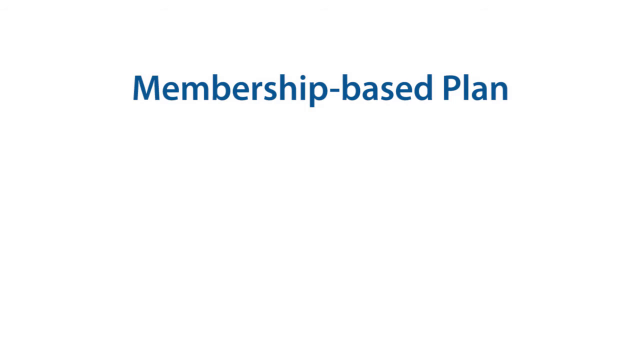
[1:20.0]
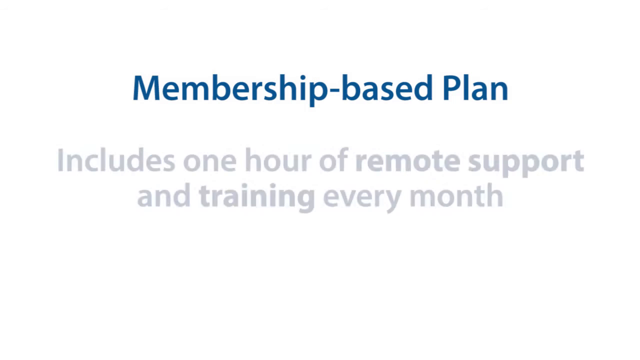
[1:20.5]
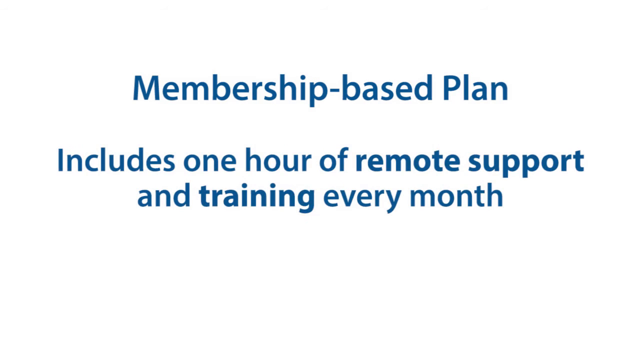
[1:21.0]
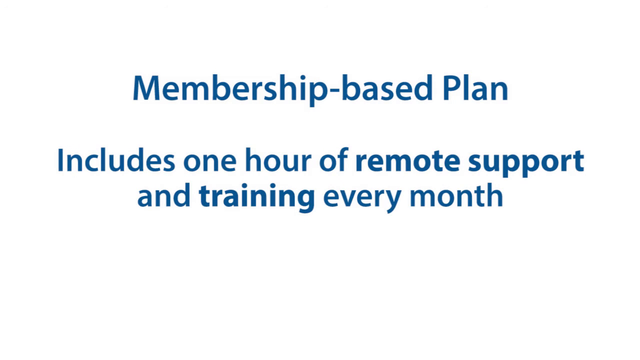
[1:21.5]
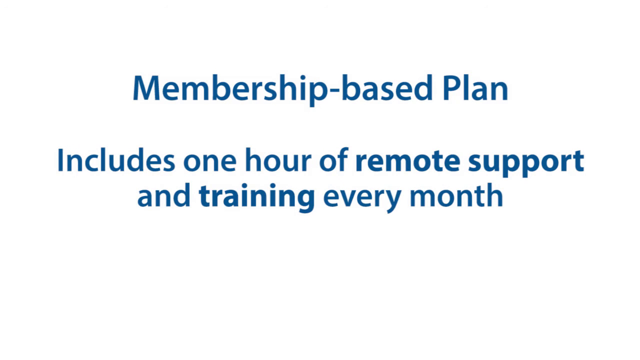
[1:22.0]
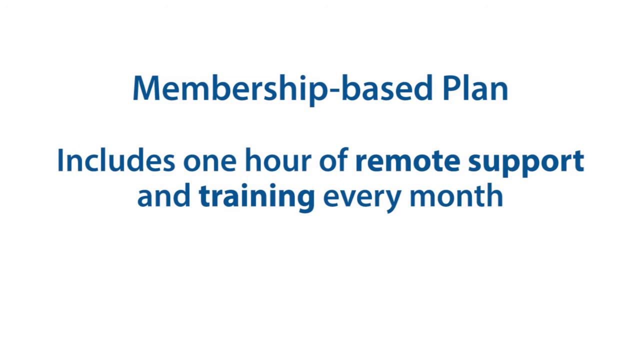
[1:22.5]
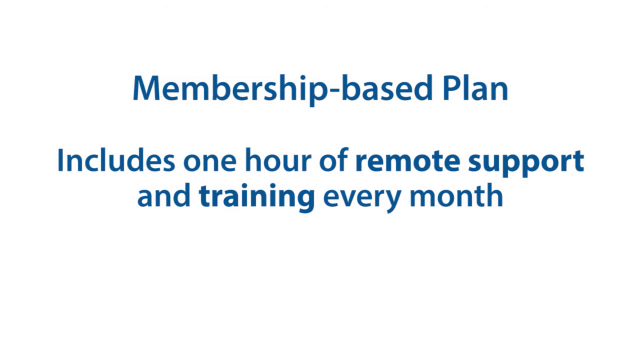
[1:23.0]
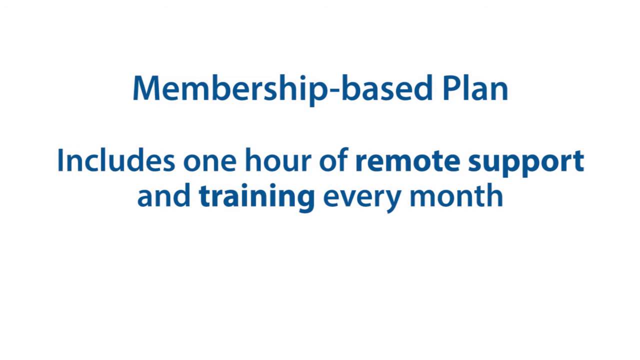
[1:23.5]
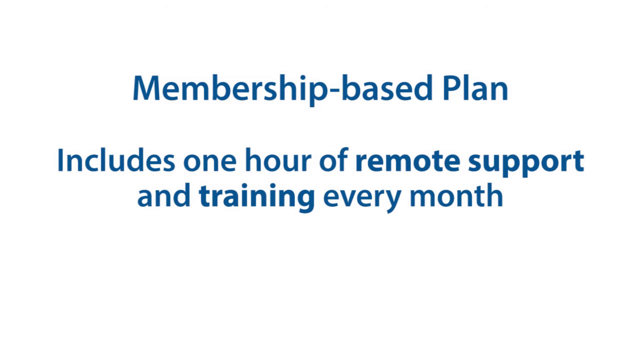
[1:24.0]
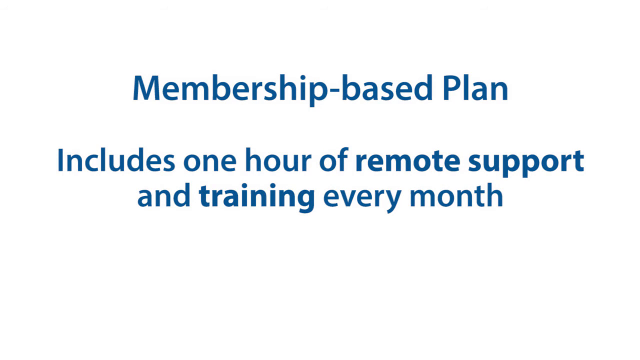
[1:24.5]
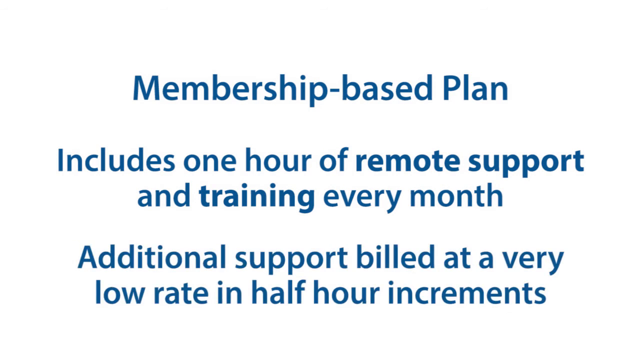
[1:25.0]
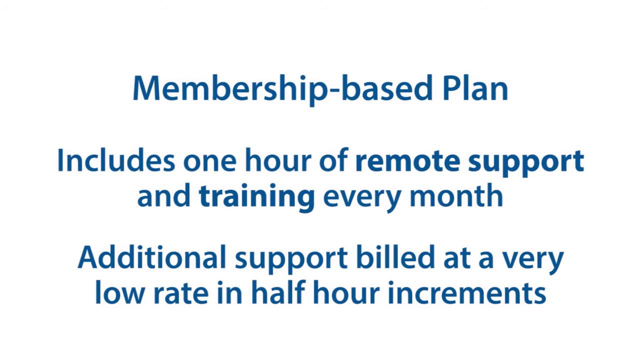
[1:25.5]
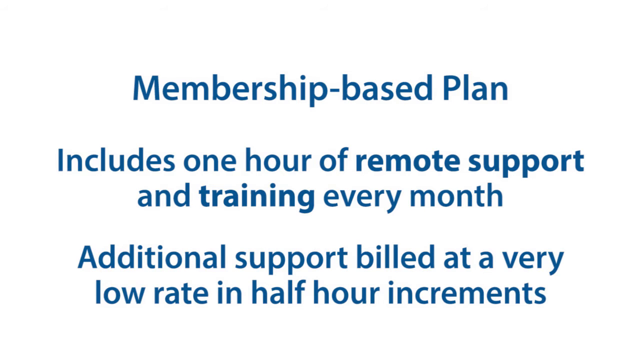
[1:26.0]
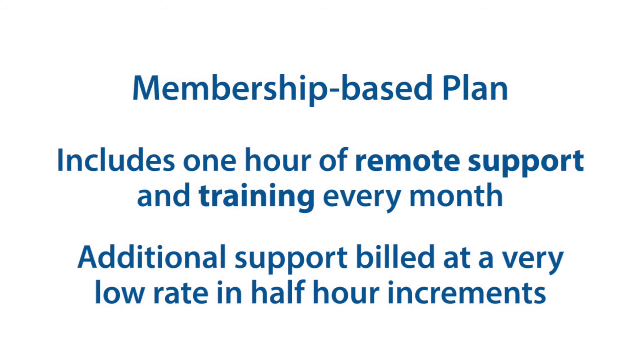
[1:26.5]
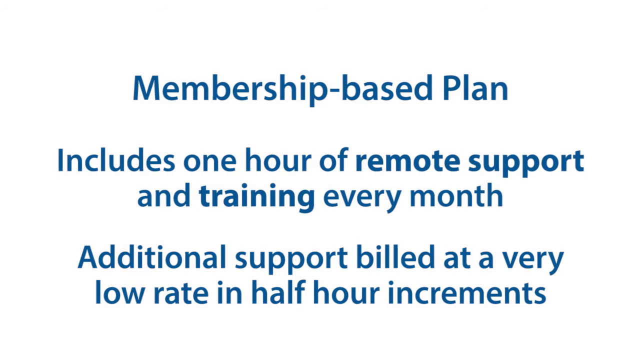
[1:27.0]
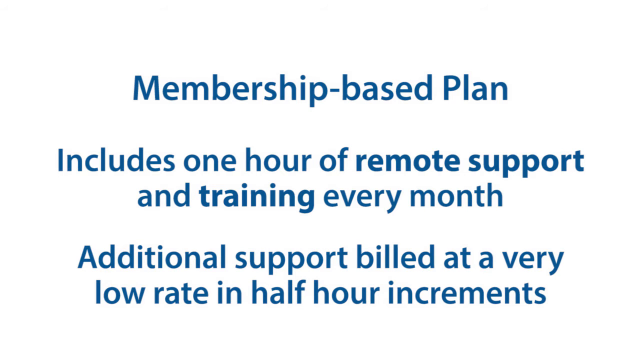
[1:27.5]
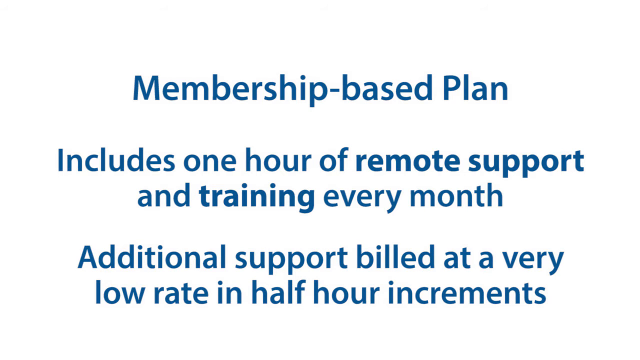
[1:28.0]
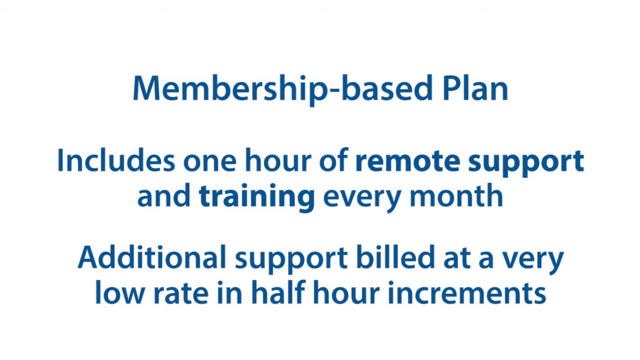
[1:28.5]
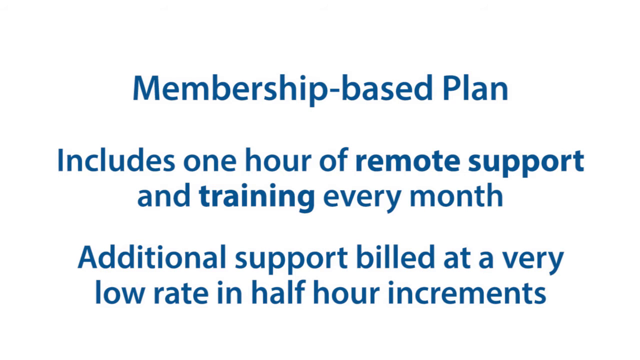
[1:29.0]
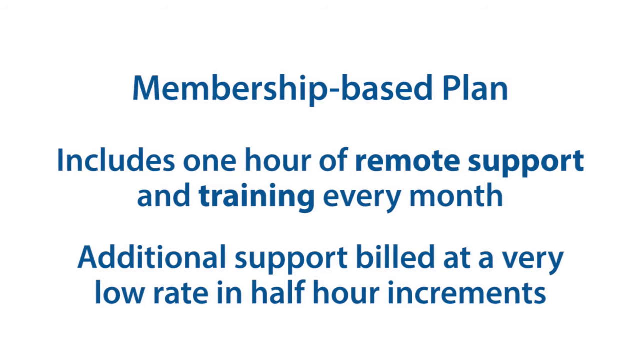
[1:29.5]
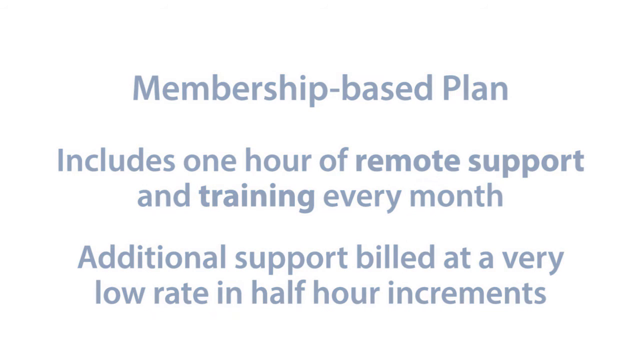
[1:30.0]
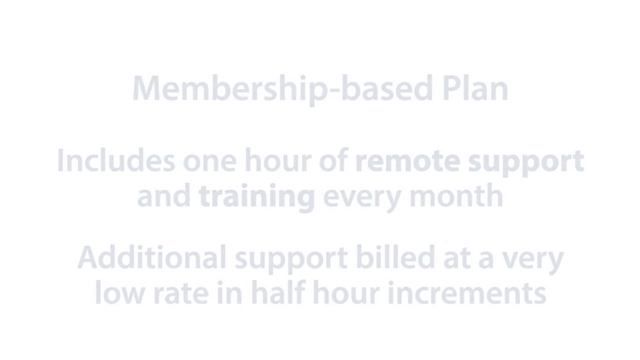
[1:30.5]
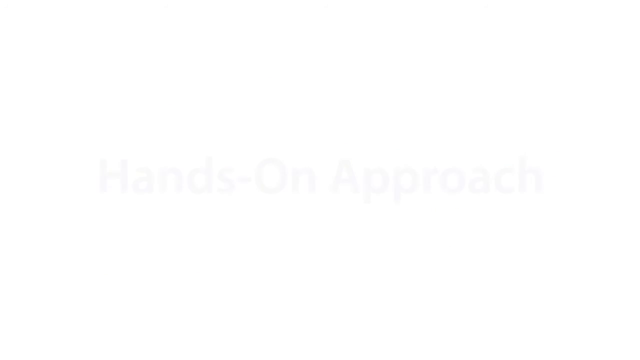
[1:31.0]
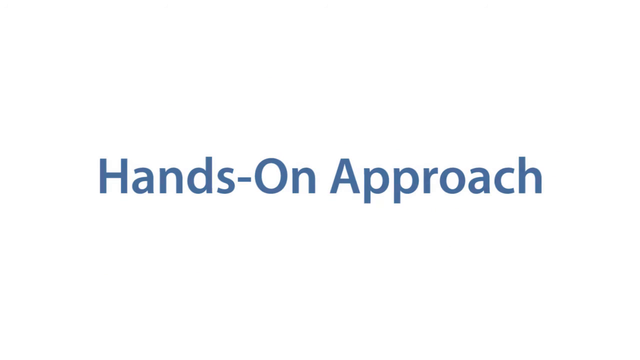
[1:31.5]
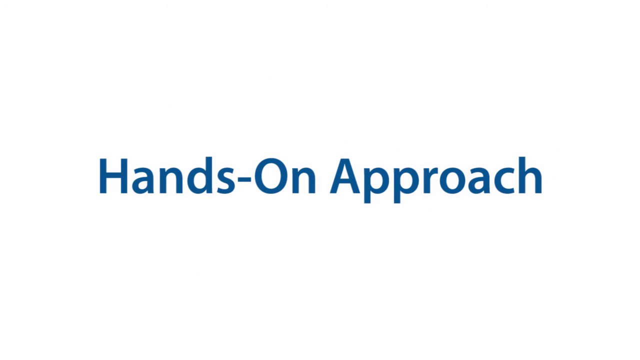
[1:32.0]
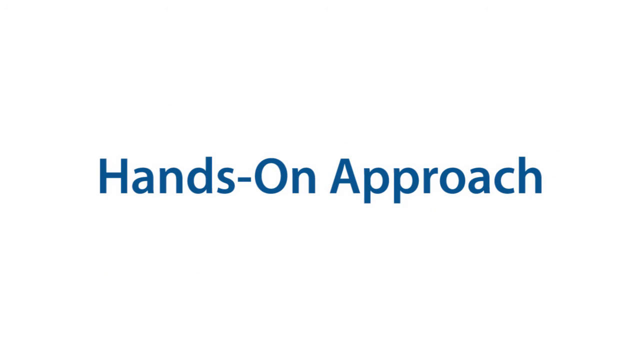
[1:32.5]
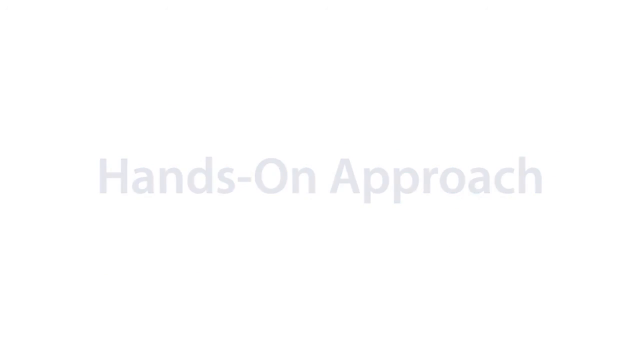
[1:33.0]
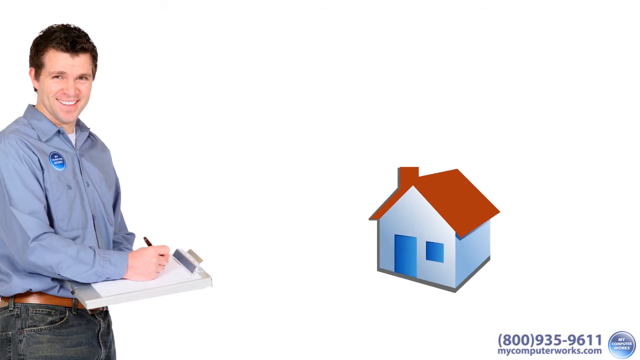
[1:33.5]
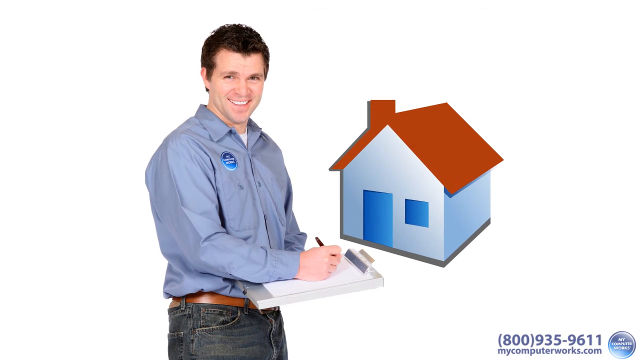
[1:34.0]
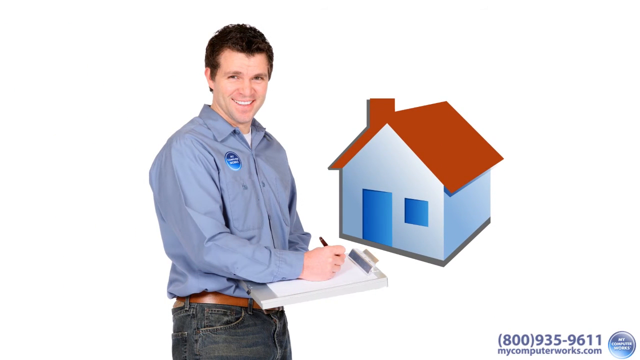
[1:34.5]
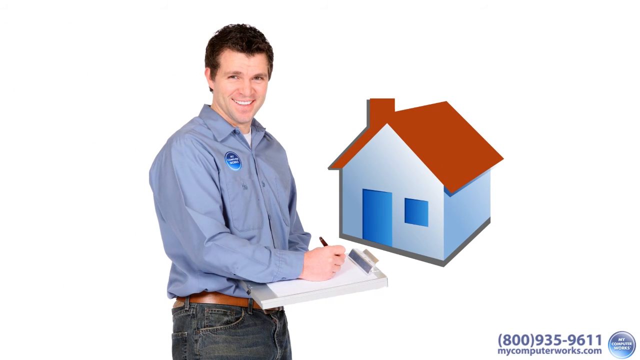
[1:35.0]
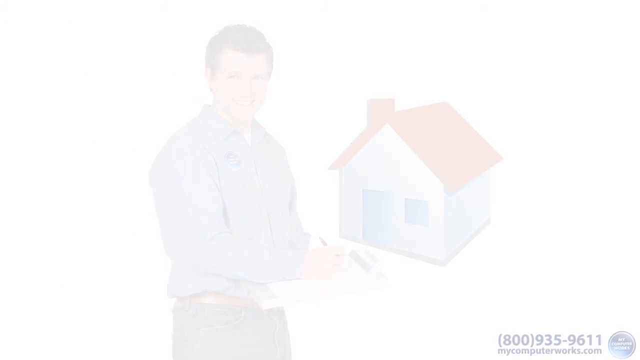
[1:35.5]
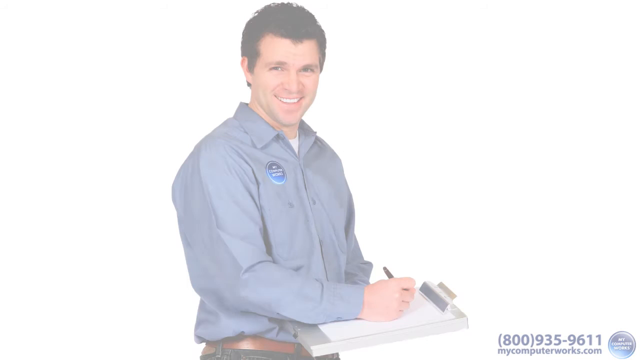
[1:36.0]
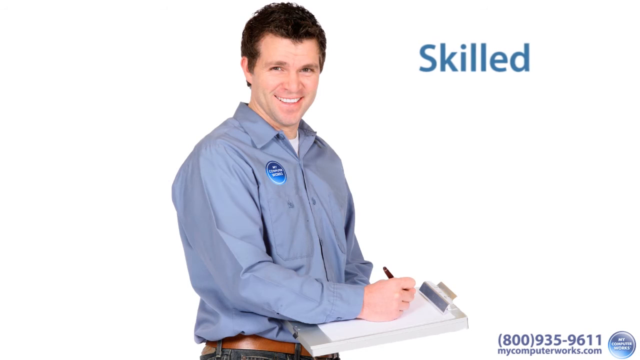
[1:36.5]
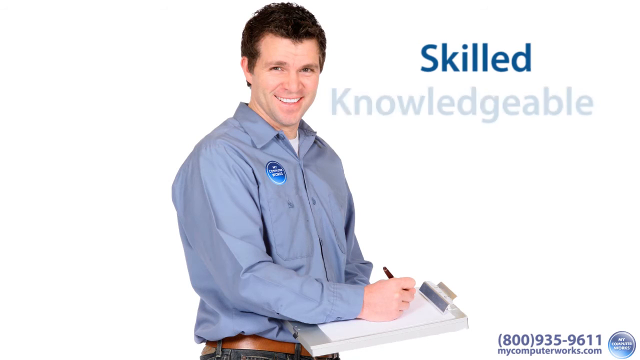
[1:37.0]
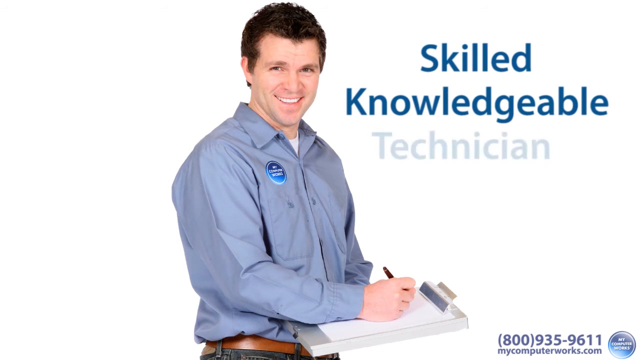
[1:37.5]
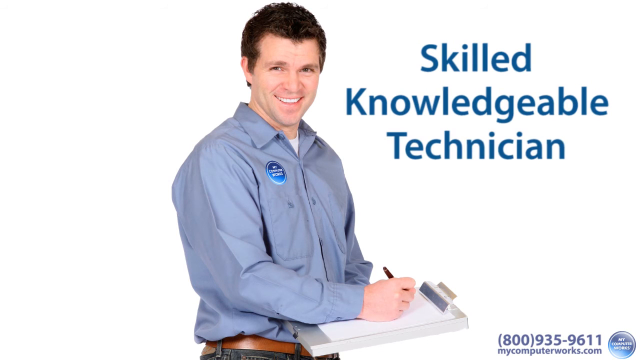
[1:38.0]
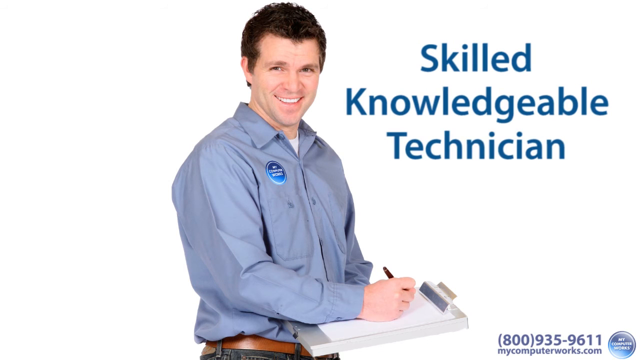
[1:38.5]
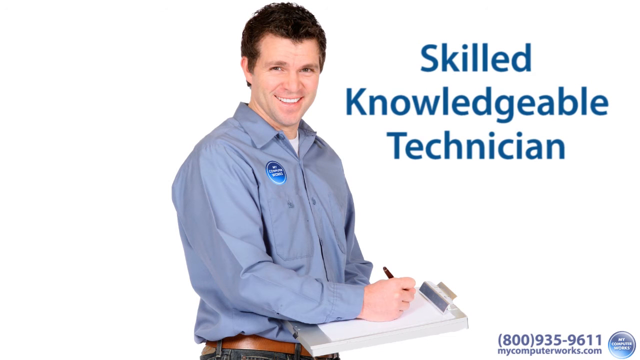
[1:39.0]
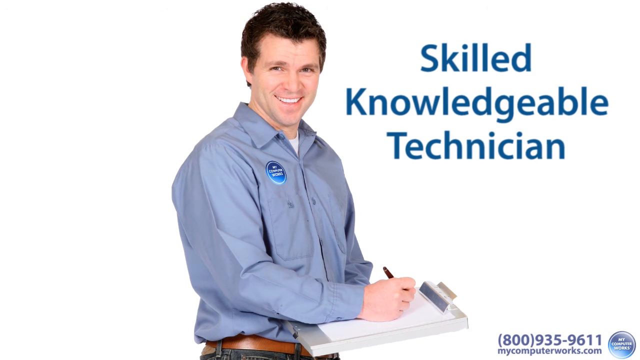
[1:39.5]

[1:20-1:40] The blue text "Membership-based Plan" remains along the top of the white screen. More blue text fades in underneath: "Includes one hour of remote support and training every month". After a few seconds, more blue text appears below it: "Additional support billed at a very low rate in half hour increments". This text fades out, leaving the white screen, before blue text fades in in the middle saying "hands-on approach". It fades out, and then a simple 3D rendering of a house fades in at the bottom right. It has white walls on the front and right, a blue door and window, and a pitched red roof with a chimney on the left. The house continues to grow and become less transparent as it moves into the middle of the screen. From the left, a still photograph of a man from just below the waist up slides in, becoming less transparent. He is a white man with brown hair, wearing a grey shirt with the blue My Computer Works logo on the top right of his chest. He holds a clipboard with his left hand and has his right hand poised at the top of the clipboard holding a pen, as if writing. He faces to his right, but his head turns towards the camera and he smiles. The images of the man and the house fade out, and a closer shot of the man from the waist to his head fades in. Blue text appears one word at a time in a column to his right: "skilled", "knowledgeable", "technician". The image of the man is then swept off to the right of the screen, leaving a white screen.